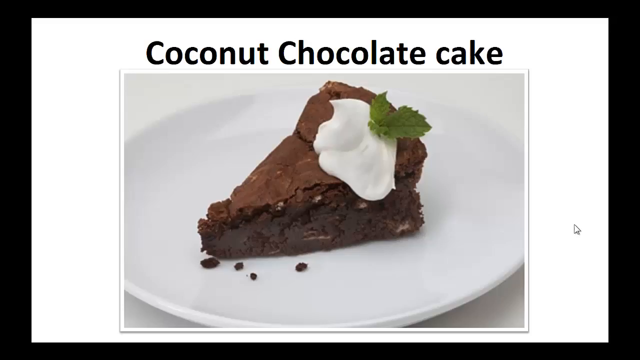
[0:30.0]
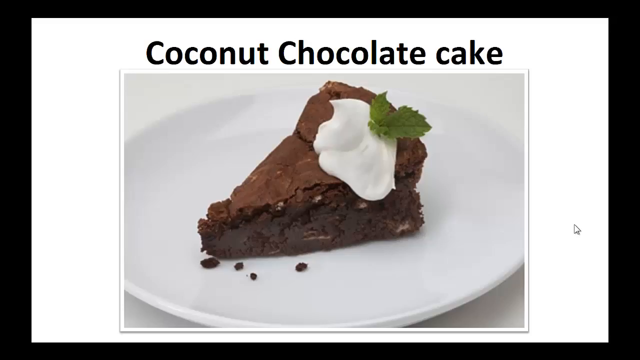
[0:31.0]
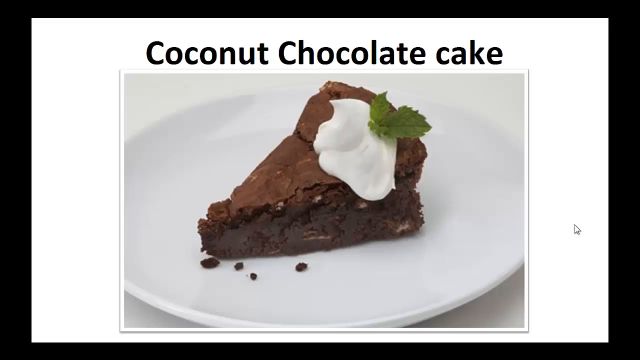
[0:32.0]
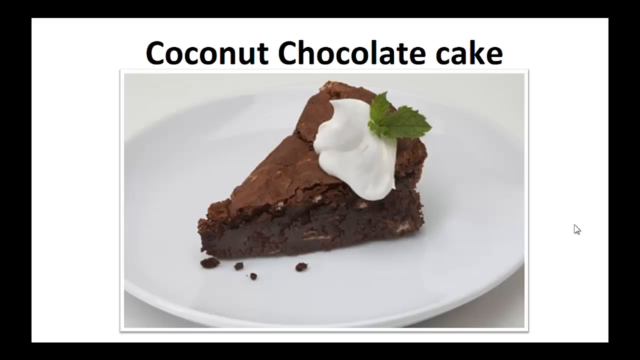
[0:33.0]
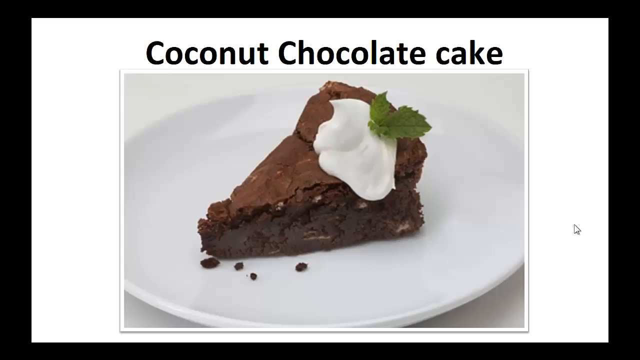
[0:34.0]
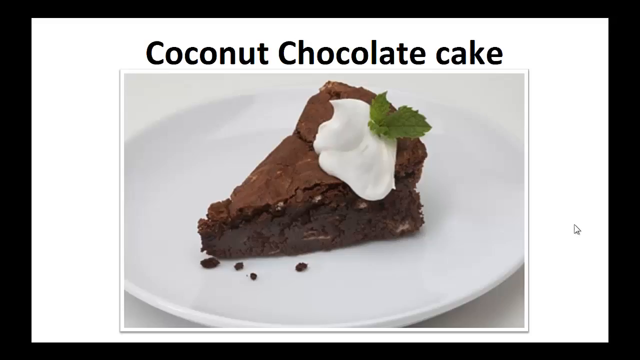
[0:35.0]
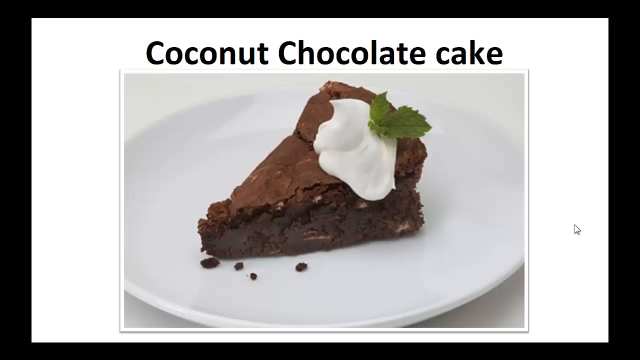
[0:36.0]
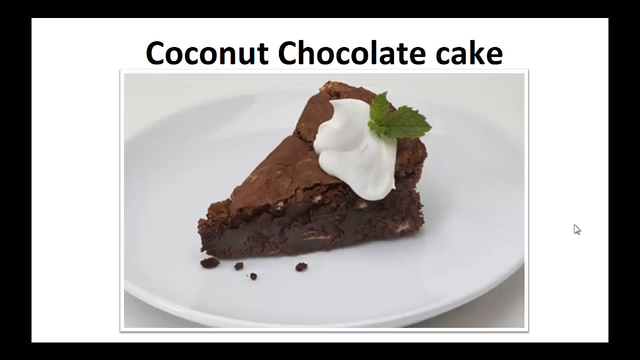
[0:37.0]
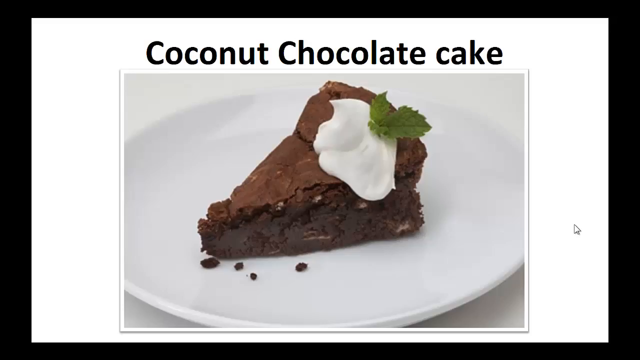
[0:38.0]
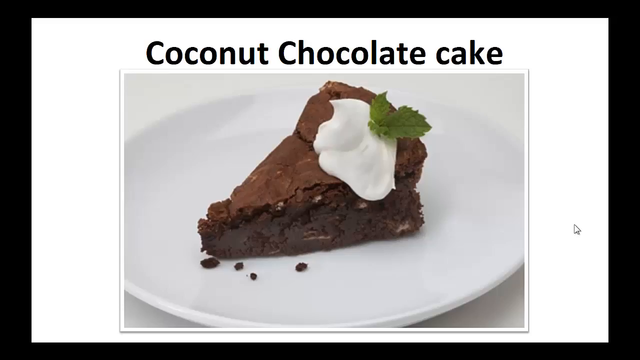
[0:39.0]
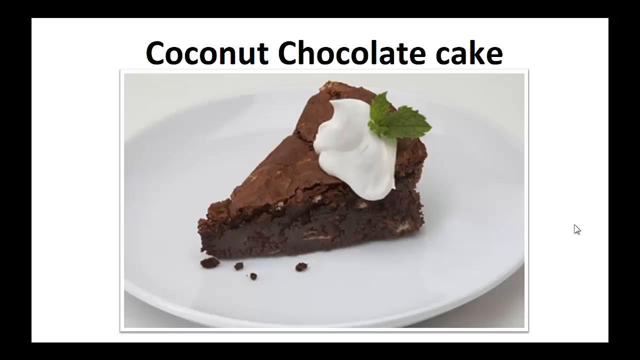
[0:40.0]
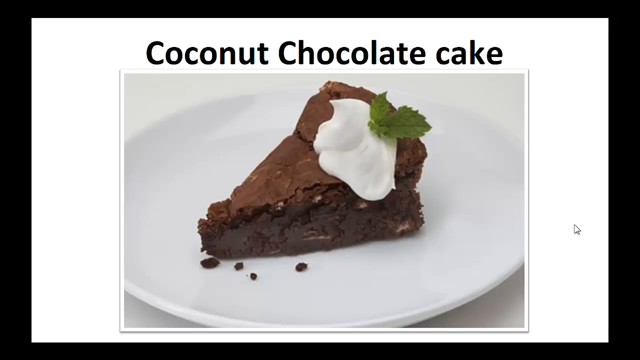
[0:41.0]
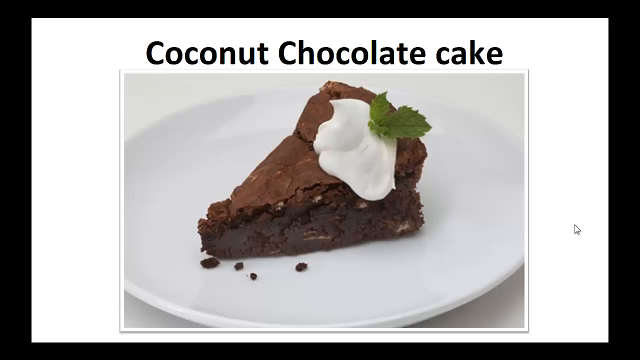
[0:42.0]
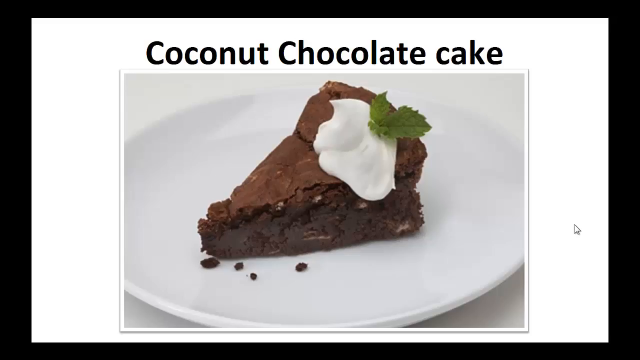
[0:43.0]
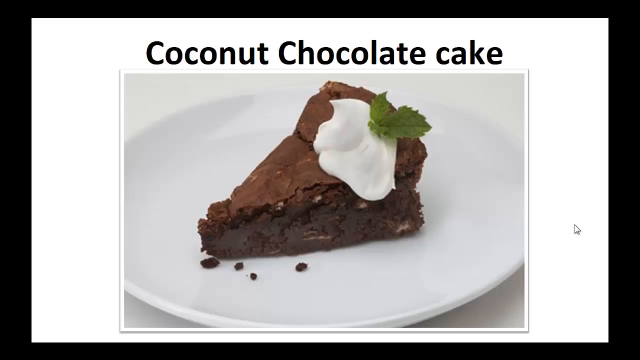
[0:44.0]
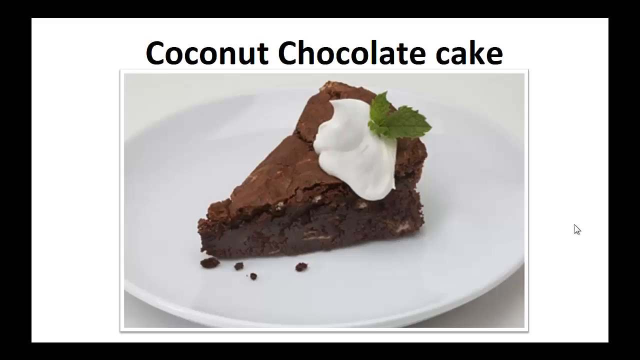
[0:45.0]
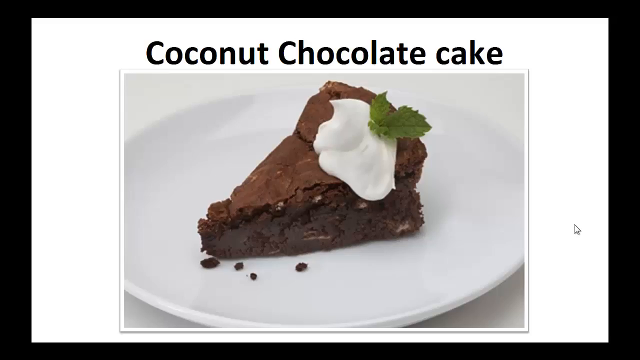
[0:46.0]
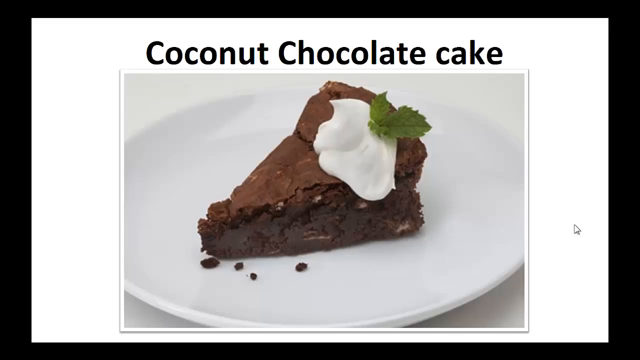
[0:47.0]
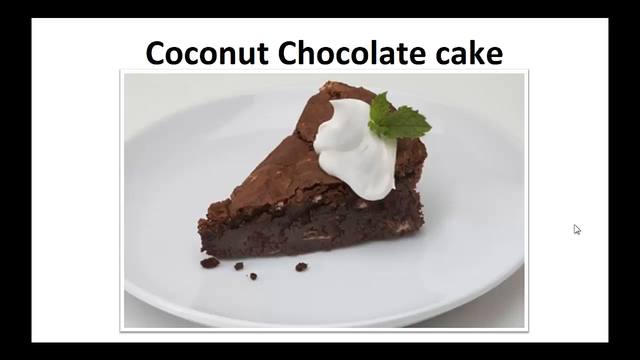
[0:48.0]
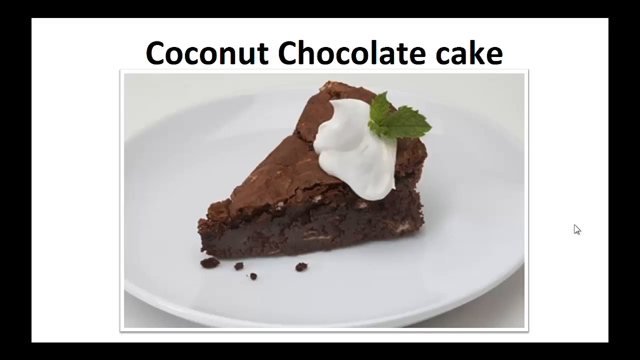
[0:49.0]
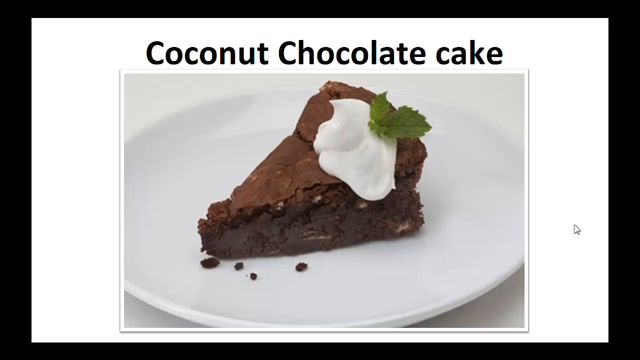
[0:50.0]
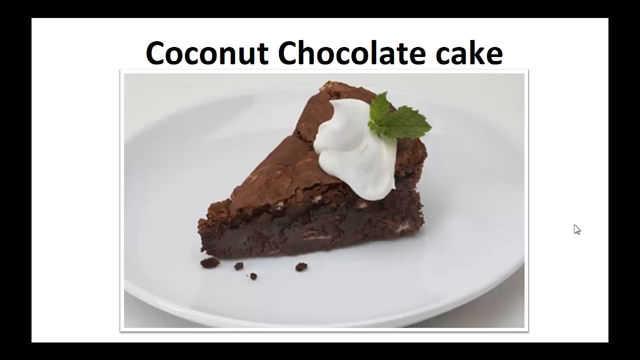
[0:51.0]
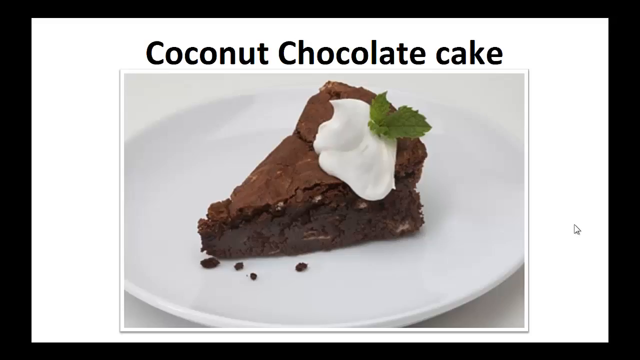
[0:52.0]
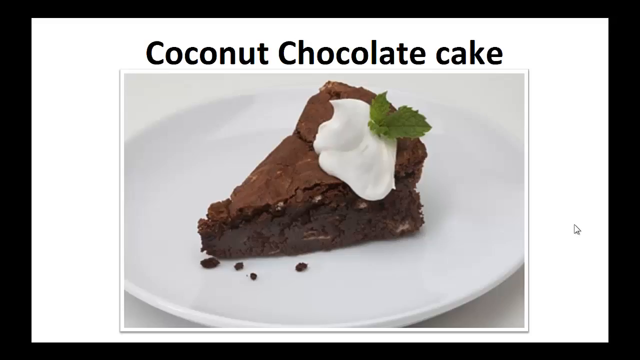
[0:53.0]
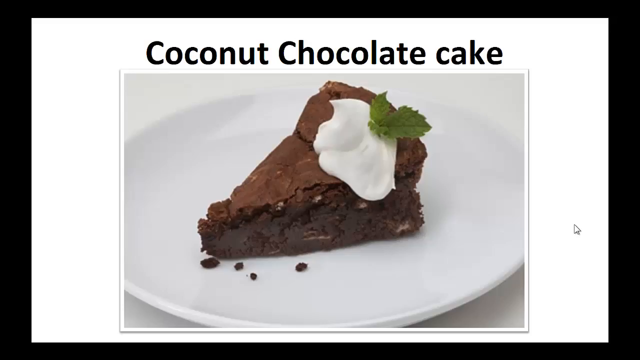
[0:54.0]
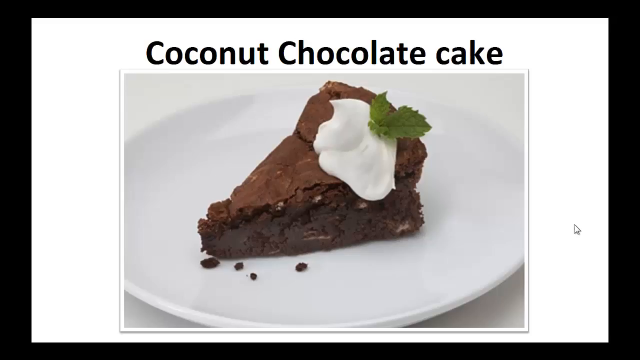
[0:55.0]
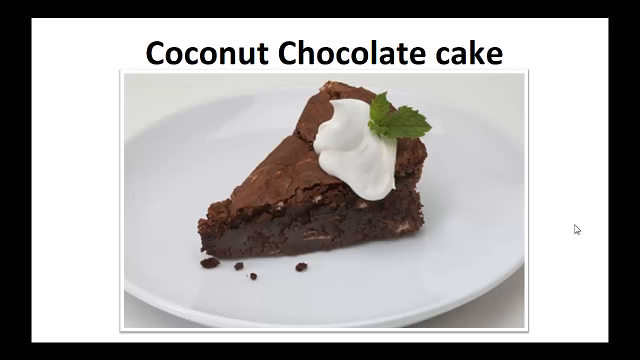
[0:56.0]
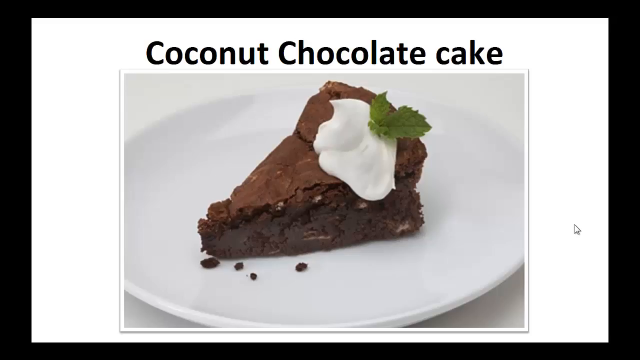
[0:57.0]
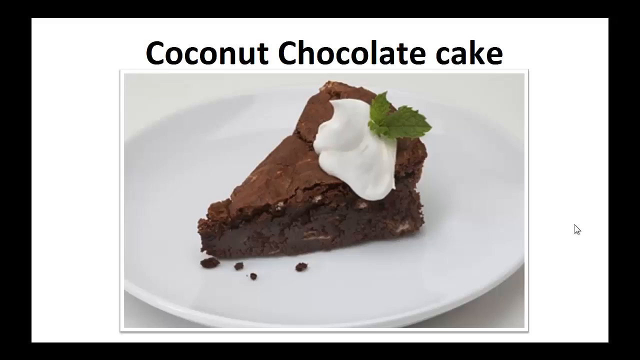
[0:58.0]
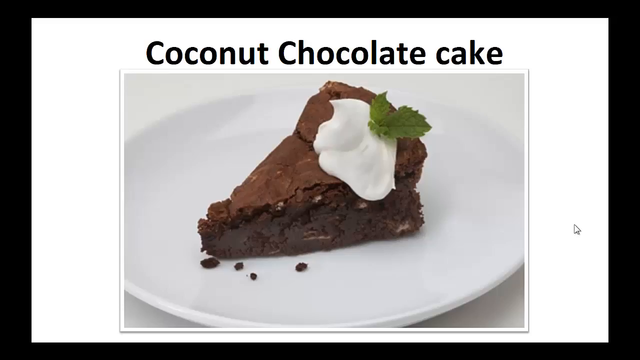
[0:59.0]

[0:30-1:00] A brown cake that looks like a chocolate cake is on a white plate, with crumbs of the cake on the plate. The cake has cream that looks white, and there is a leaf that looks like mint. The picture looks cropped, so it is not visible whether the plate is on a table. Above the cake, the words "coconut chocolate" are written in a big, clearly readable black font. Nothing changes during the shot.